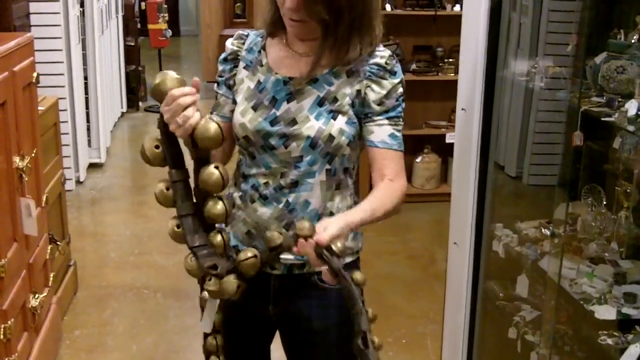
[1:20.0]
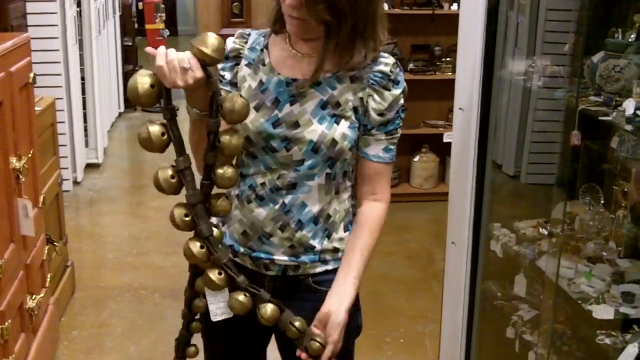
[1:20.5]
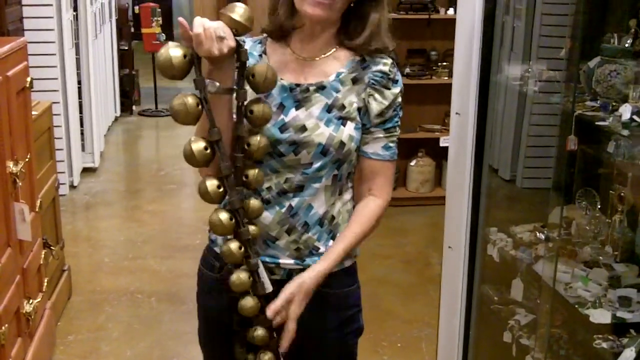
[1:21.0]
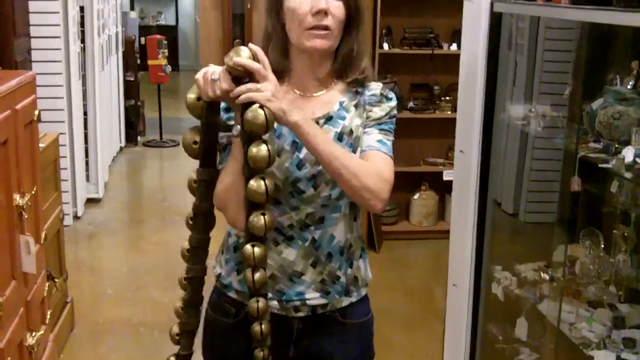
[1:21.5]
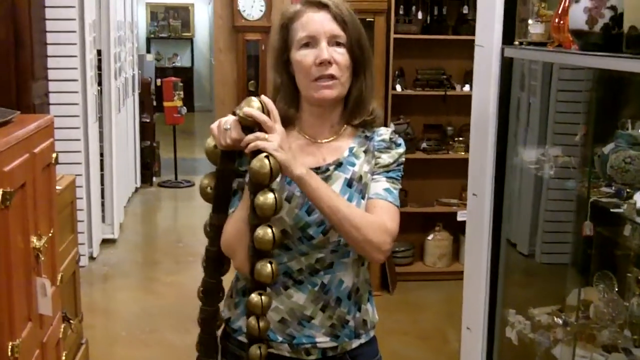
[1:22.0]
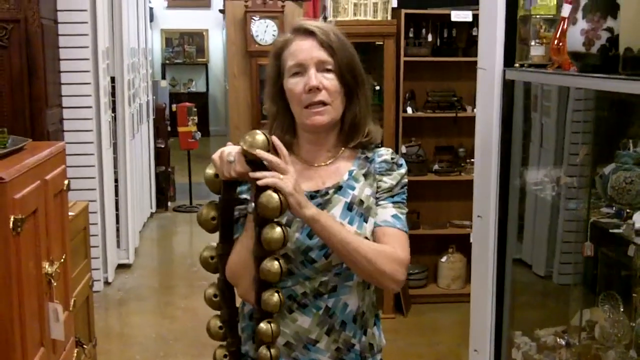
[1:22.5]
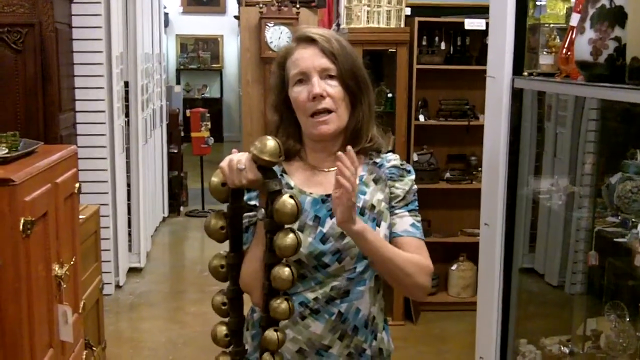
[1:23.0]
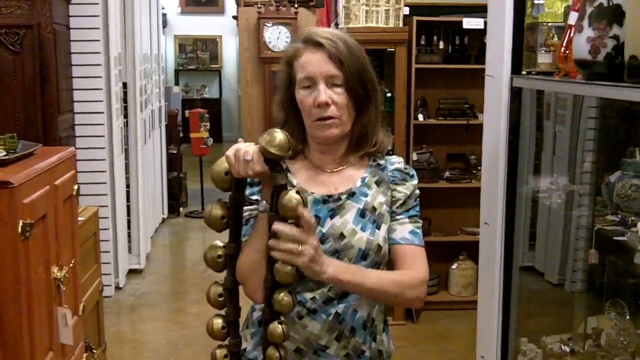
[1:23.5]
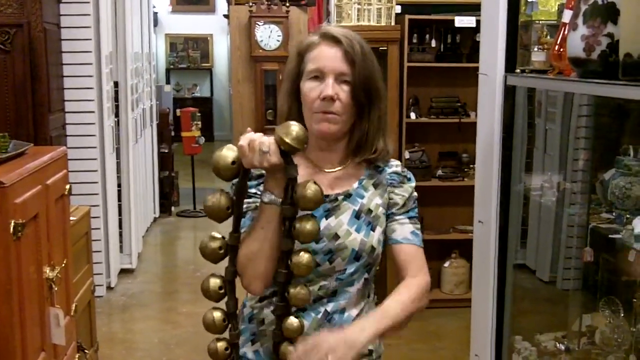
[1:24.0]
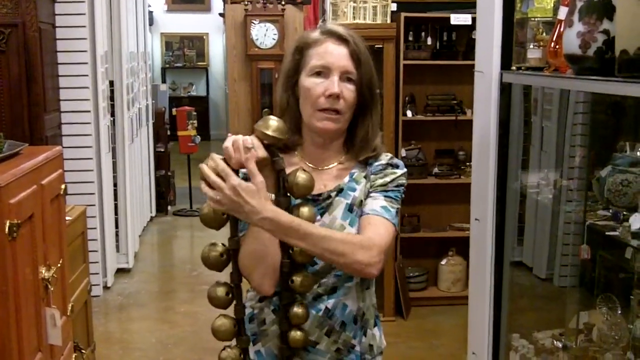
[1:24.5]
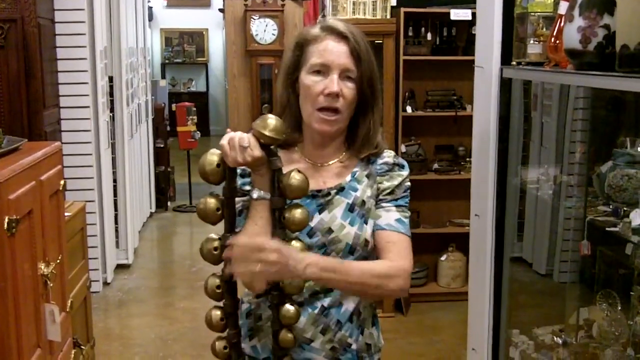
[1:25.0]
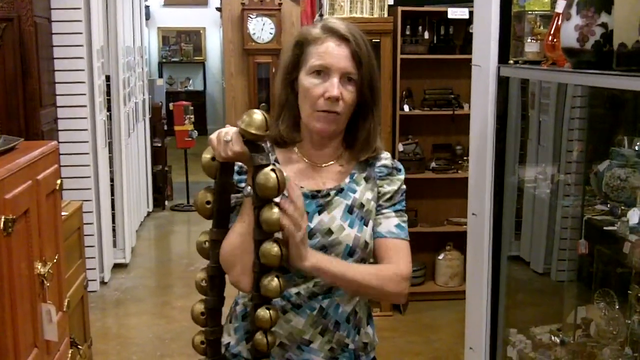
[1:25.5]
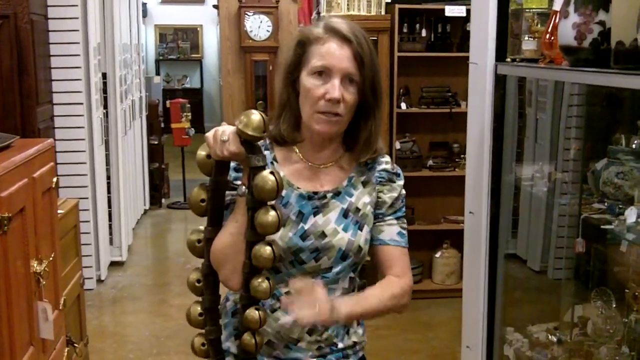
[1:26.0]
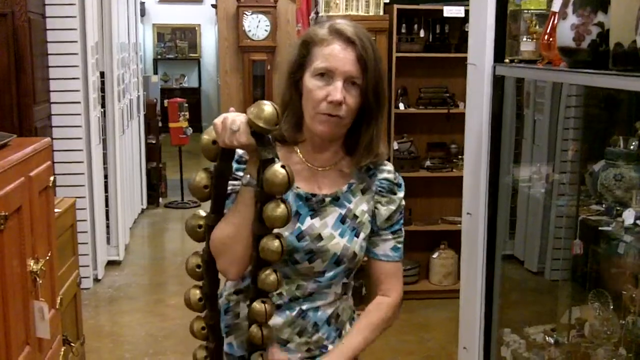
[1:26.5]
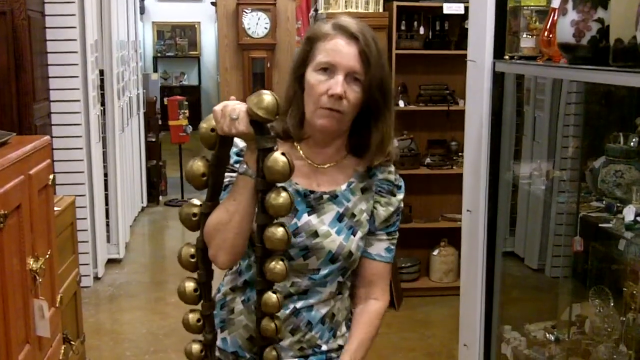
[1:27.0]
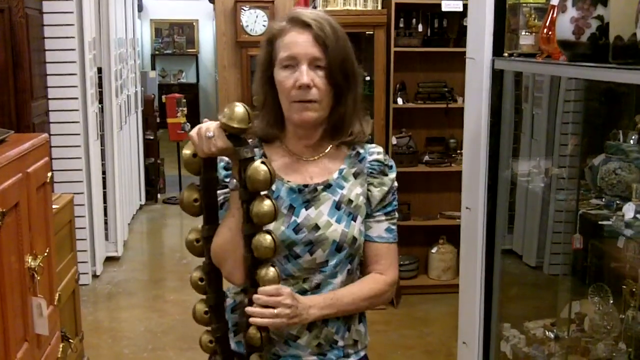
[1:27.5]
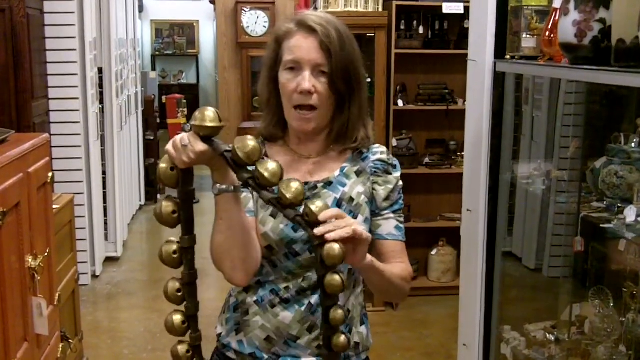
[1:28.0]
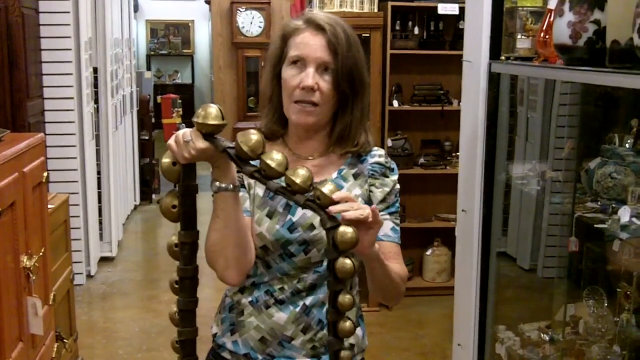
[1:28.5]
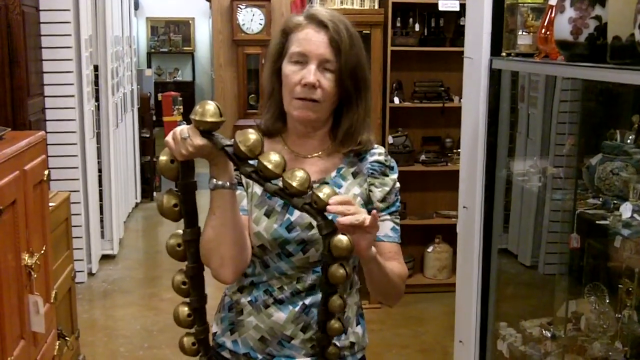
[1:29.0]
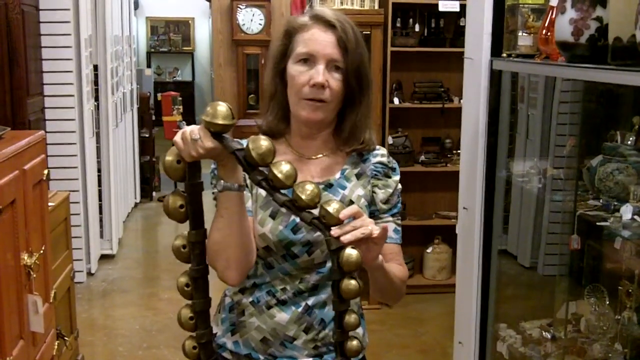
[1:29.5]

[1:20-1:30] A woman in a blue and gray patterned top stands in front of the camera, explaining things and gesturing with her hands. She holds a belt with various metal balls on it that look like bells. The belt has a leather strap, and she shows it by holding the strap vertically and moving it so that each bell is visible. Her hand movements and expression suggest she is describing the purpose or use of what she holds. She alternates between looking at the camera and gesturing toward the object in her hands.